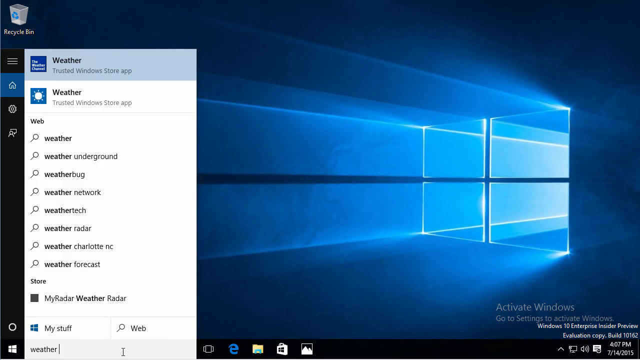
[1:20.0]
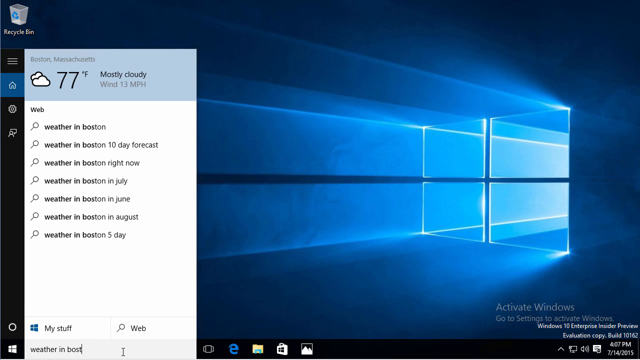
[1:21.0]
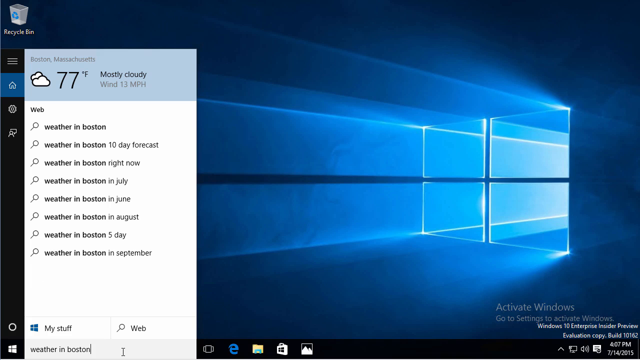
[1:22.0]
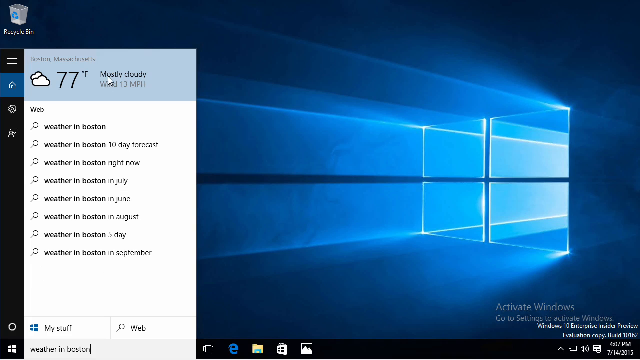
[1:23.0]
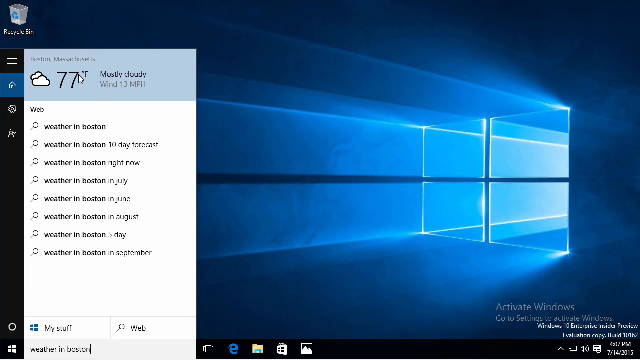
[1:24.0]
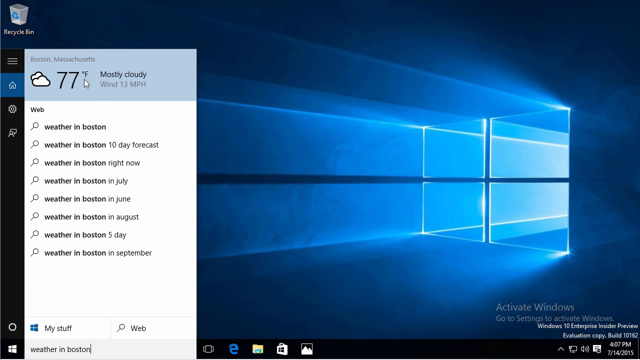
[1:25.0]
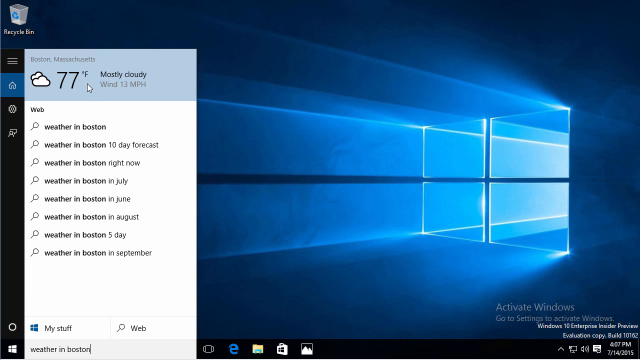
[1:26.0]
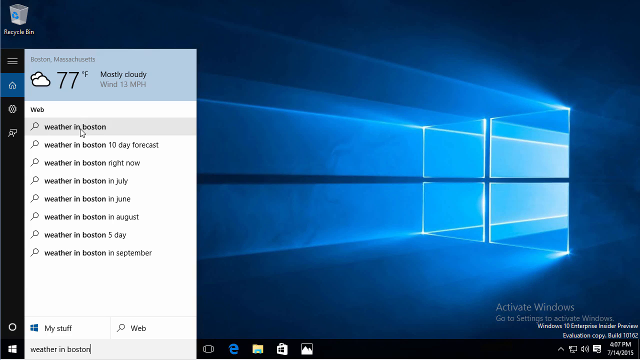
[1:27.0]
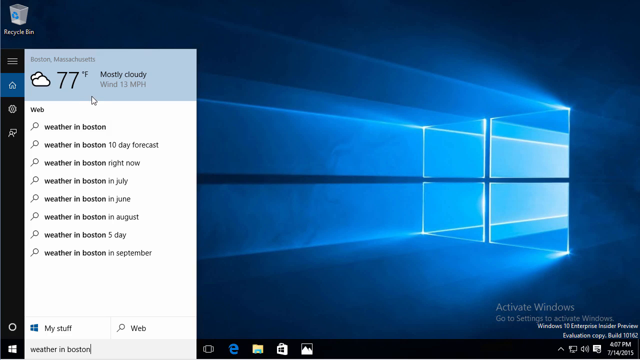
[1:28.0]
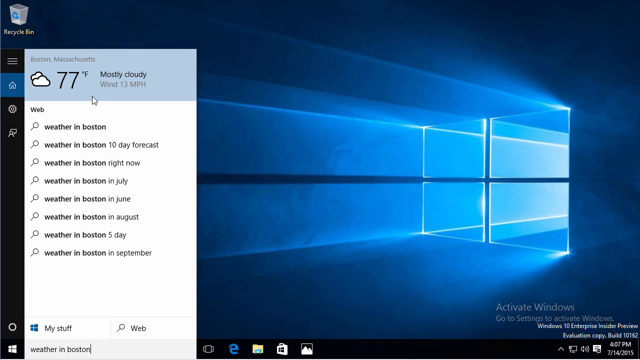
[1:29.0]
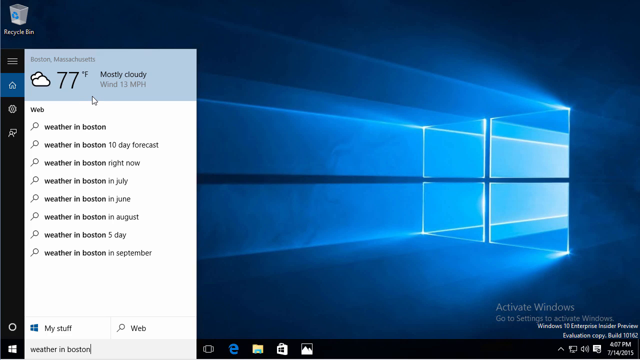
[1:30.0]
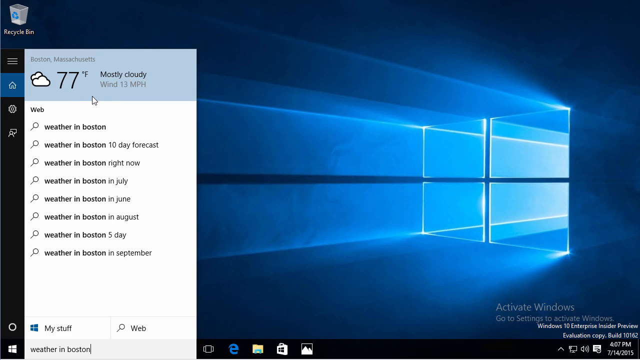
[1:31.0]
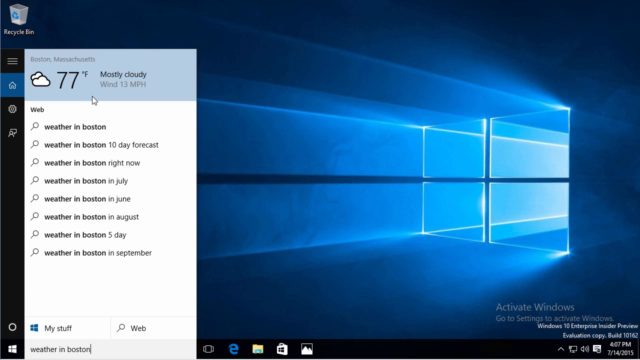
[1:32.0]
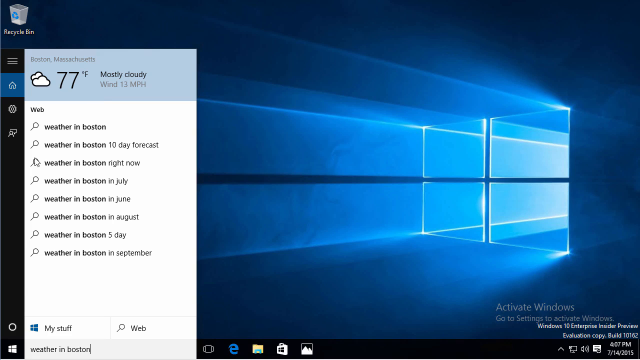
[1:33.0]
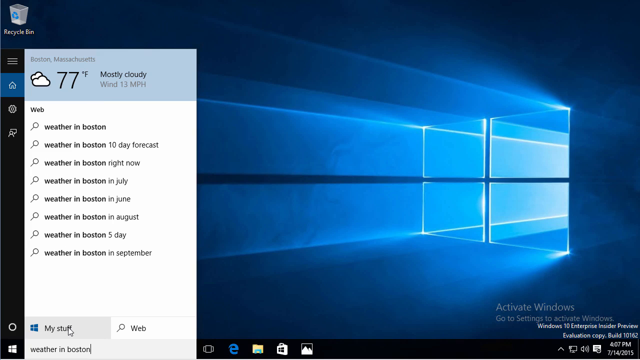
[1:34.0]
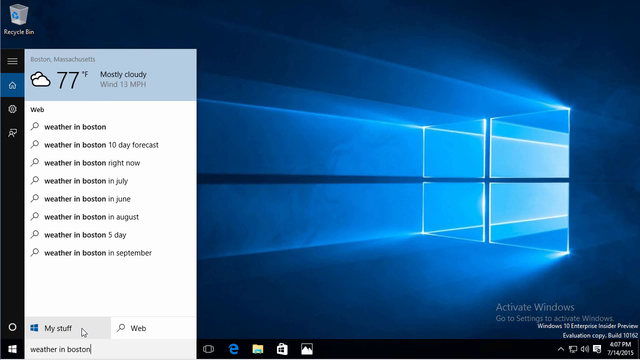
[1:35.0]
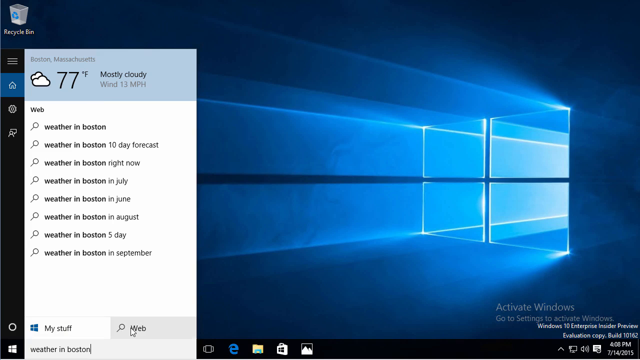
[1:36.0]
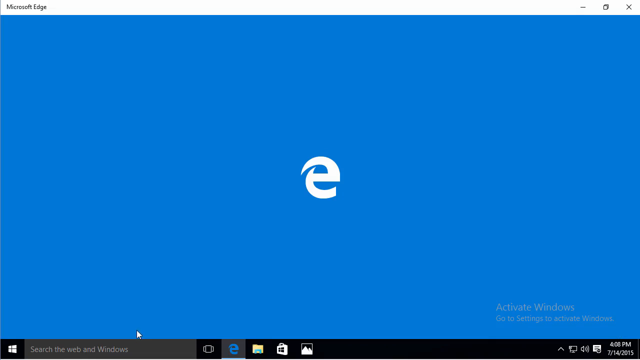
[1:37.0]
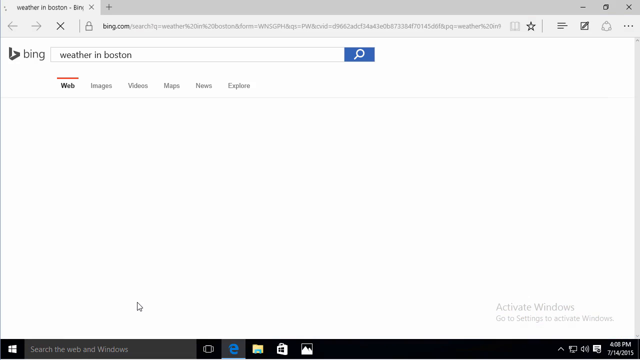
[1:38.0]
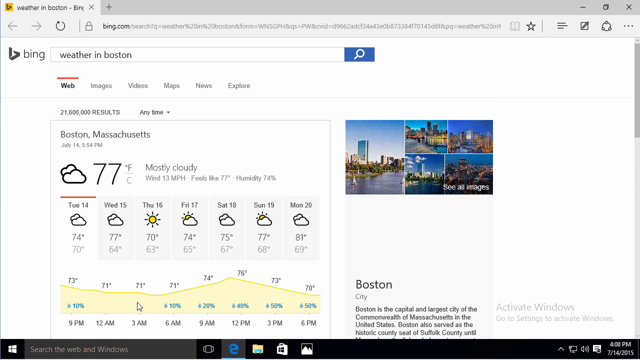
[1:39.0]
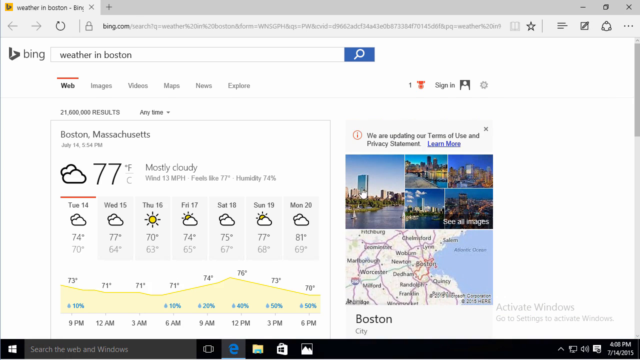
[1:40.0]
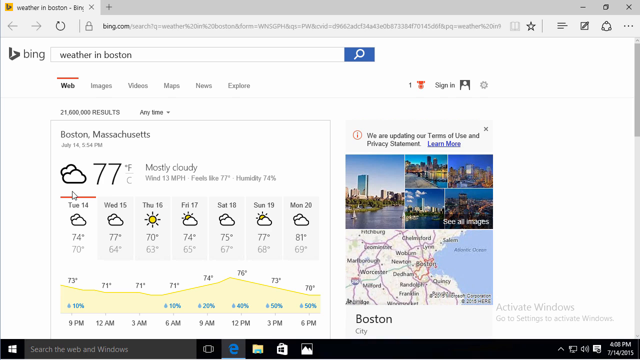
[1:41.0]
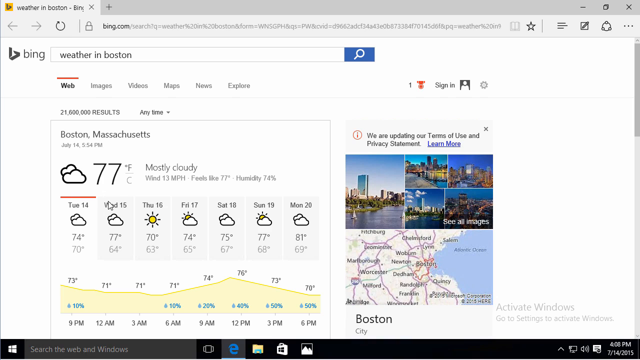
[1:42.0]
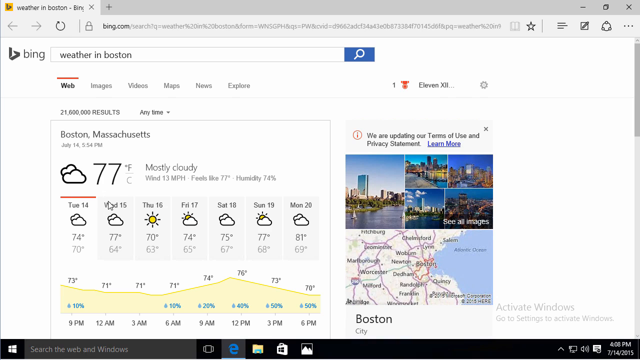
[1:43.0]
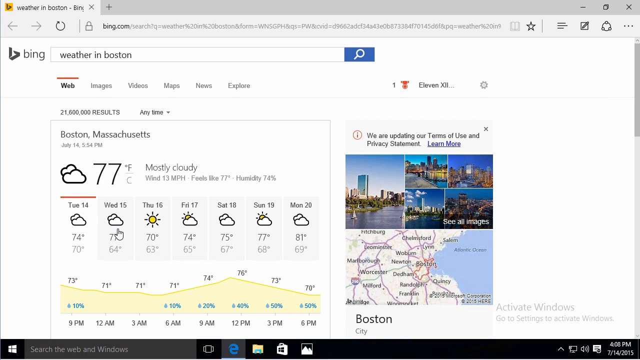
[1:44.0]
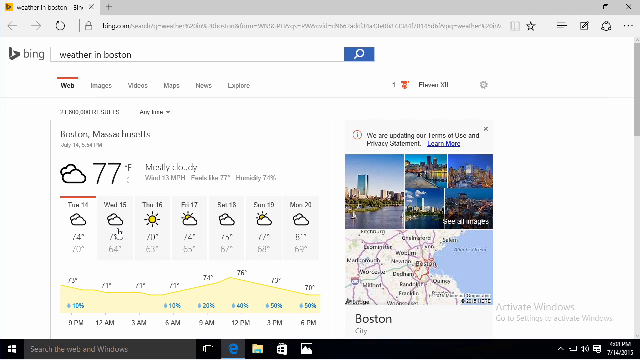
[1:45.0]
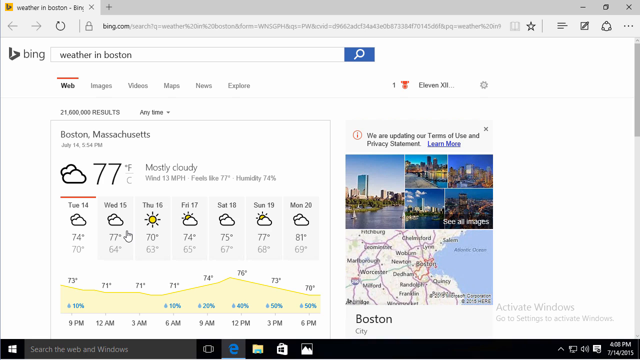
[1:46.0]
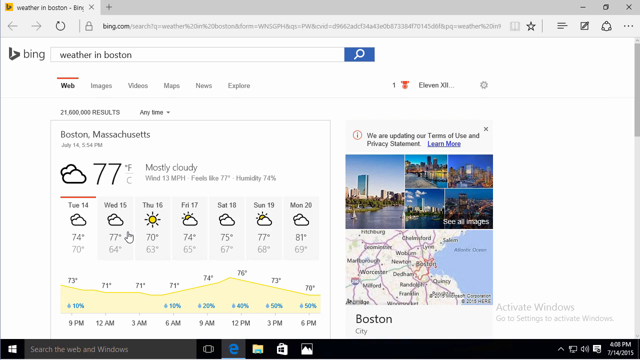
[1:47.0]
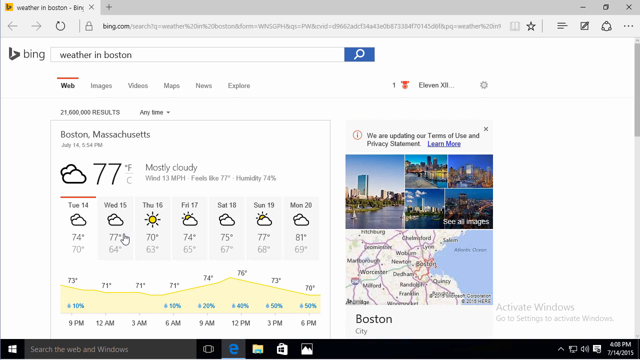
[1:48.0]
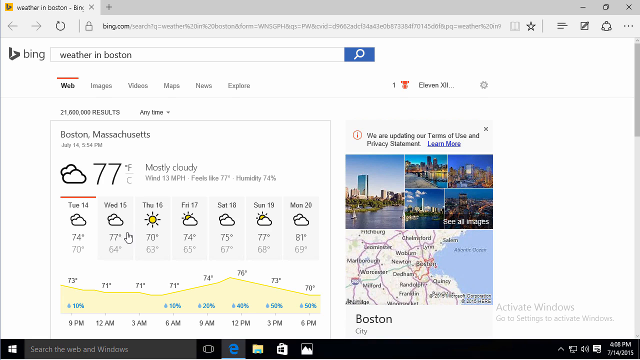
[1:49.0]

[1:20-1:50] A word is typed into the search box at the bottom of the screen. As an example, weather for Boston is searched, and a list of suggestions appears: weather in Boston, forecasts for the past 10 days, the past three days and the past hour, and Boston weather for July, June, five days ago, September and the past year.